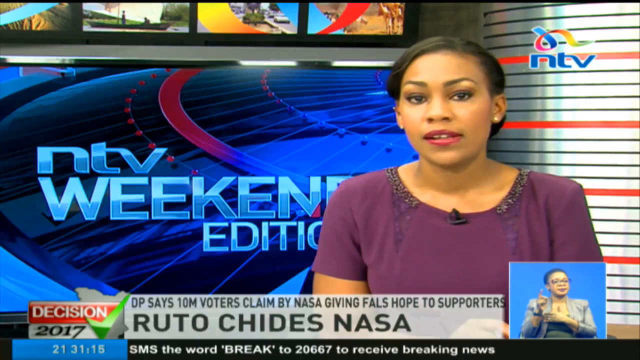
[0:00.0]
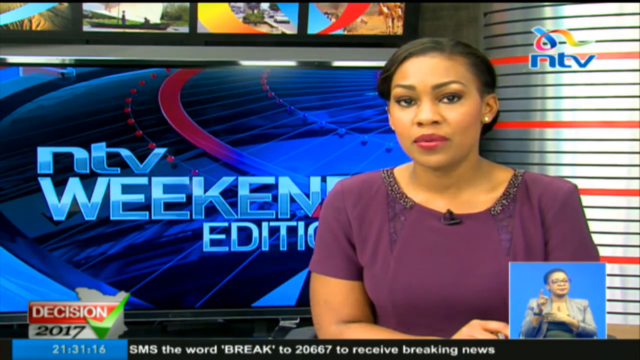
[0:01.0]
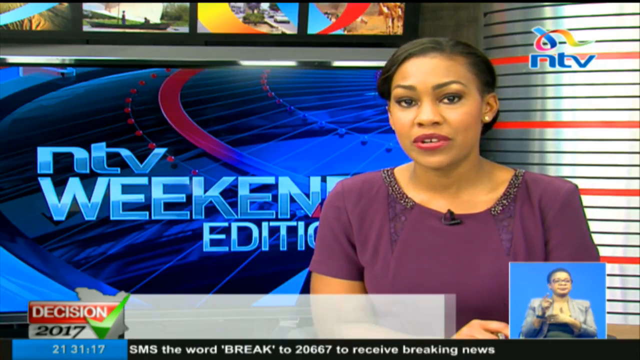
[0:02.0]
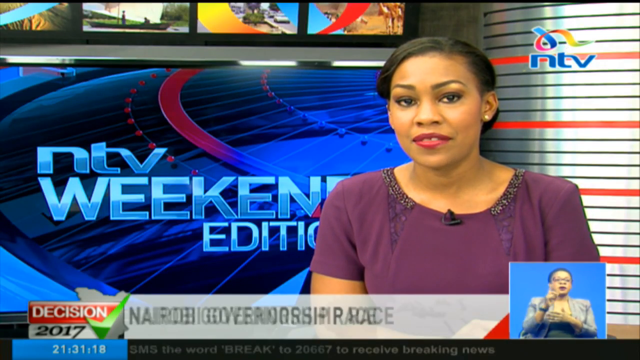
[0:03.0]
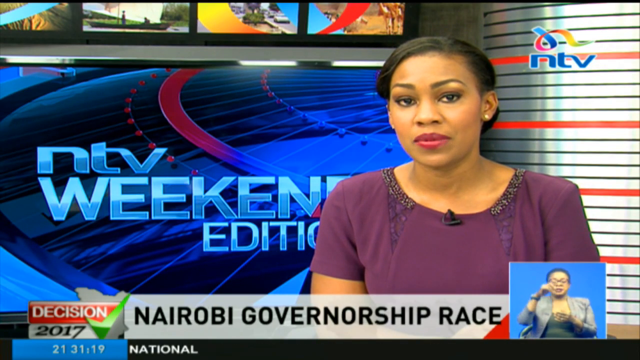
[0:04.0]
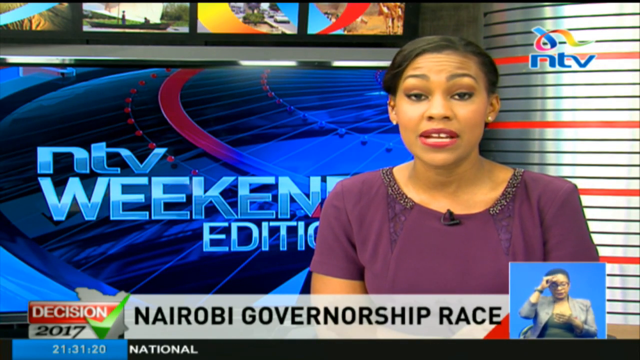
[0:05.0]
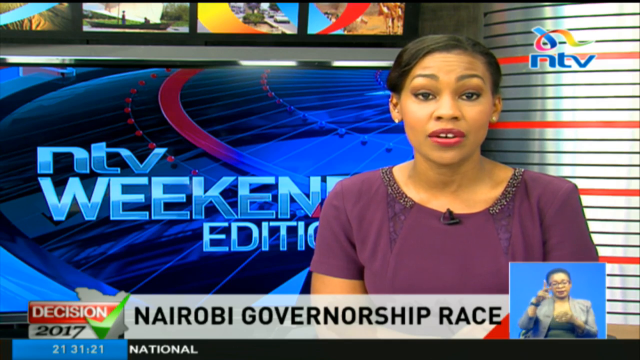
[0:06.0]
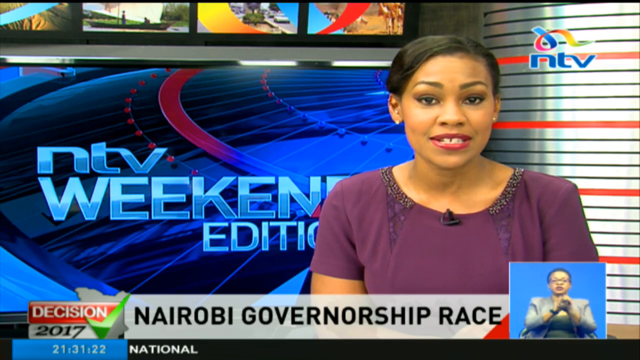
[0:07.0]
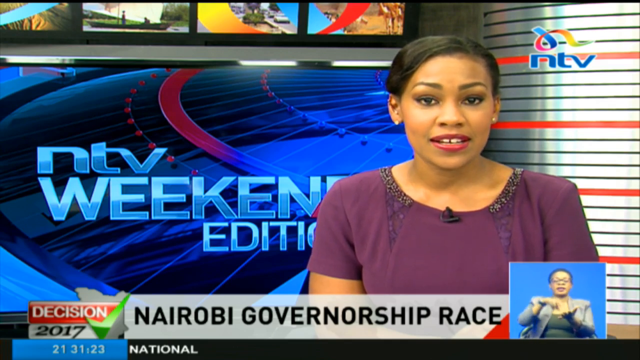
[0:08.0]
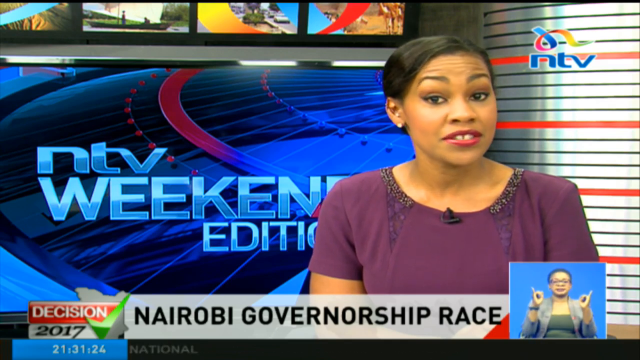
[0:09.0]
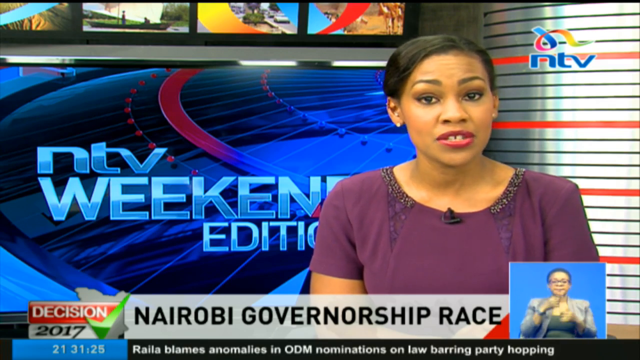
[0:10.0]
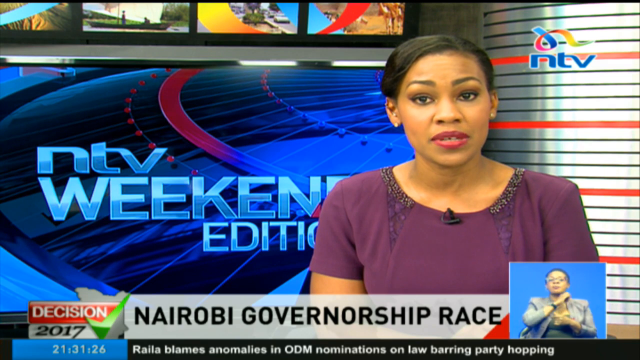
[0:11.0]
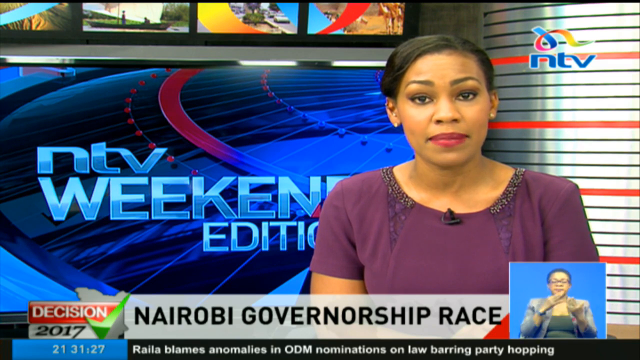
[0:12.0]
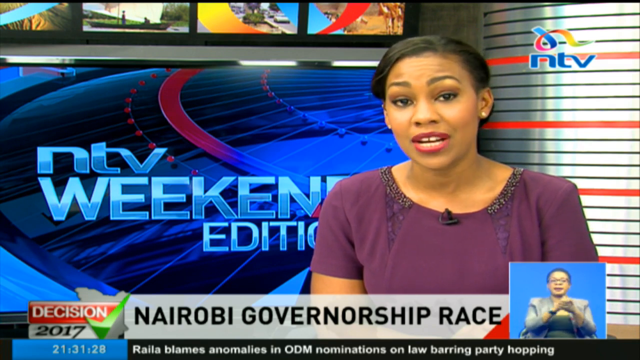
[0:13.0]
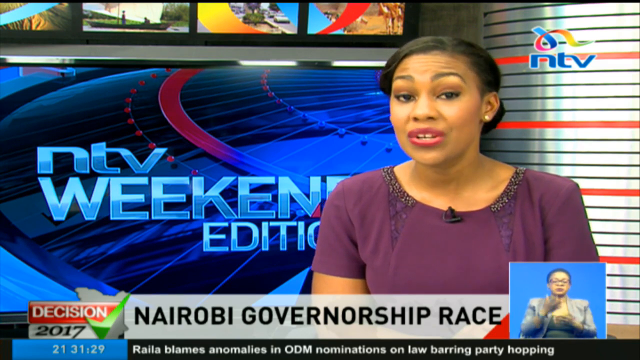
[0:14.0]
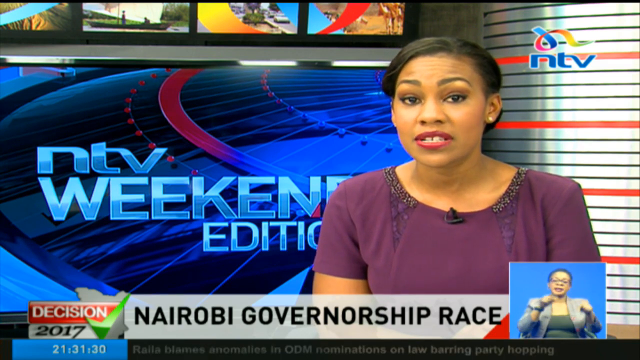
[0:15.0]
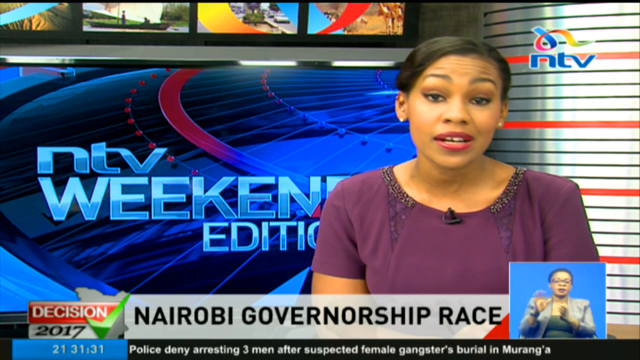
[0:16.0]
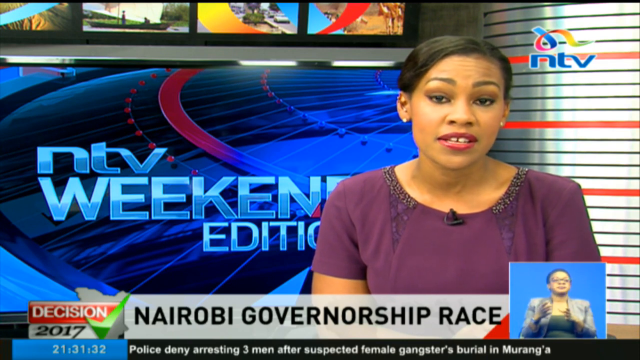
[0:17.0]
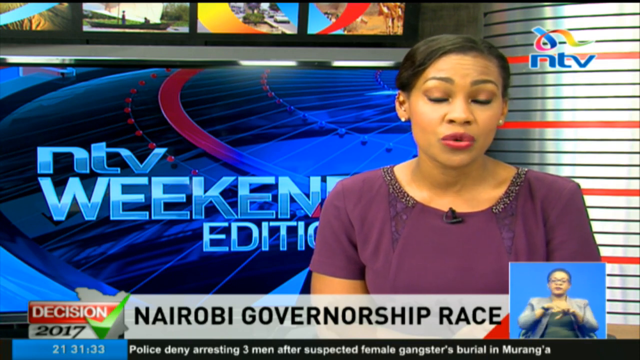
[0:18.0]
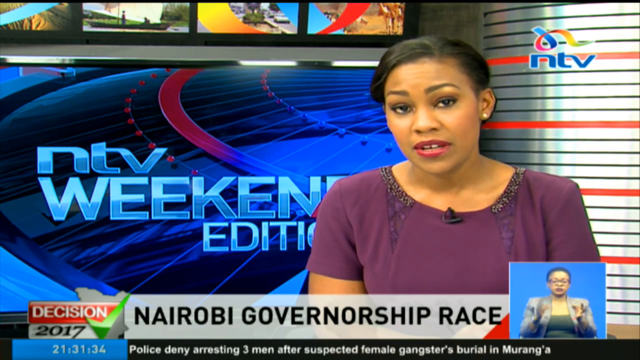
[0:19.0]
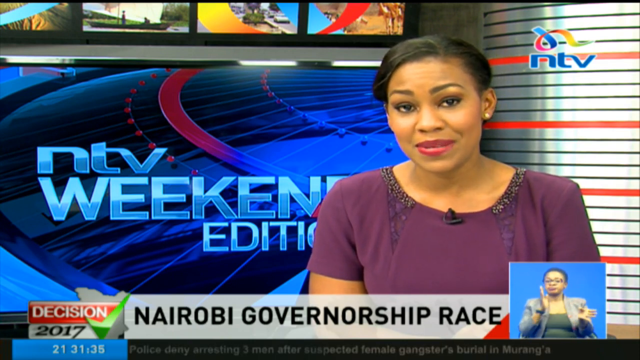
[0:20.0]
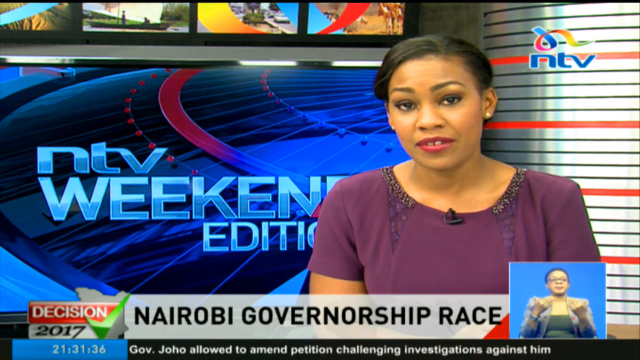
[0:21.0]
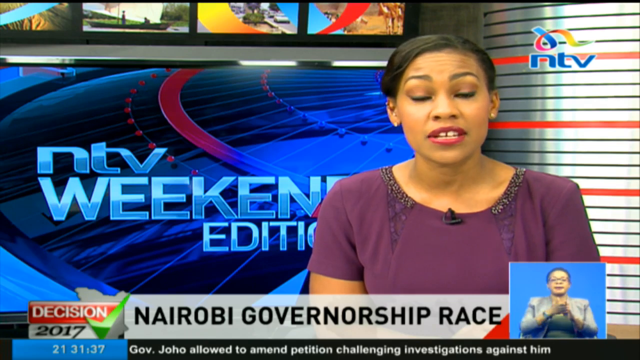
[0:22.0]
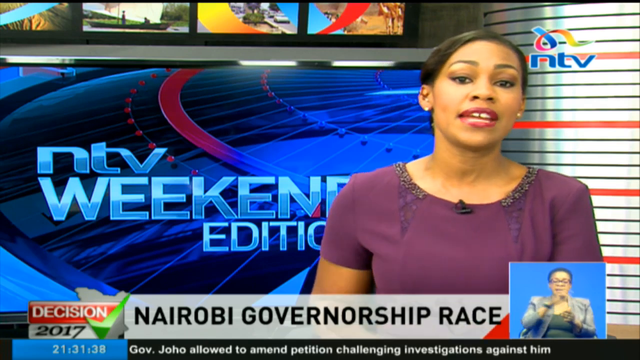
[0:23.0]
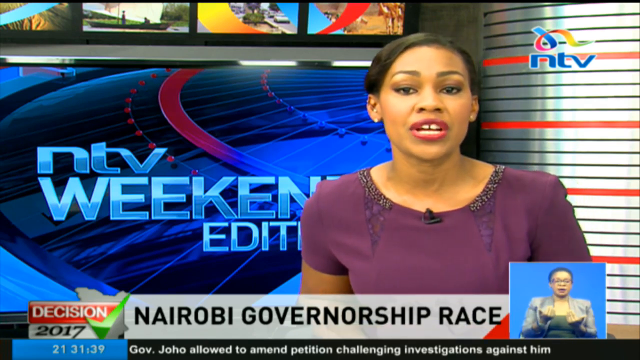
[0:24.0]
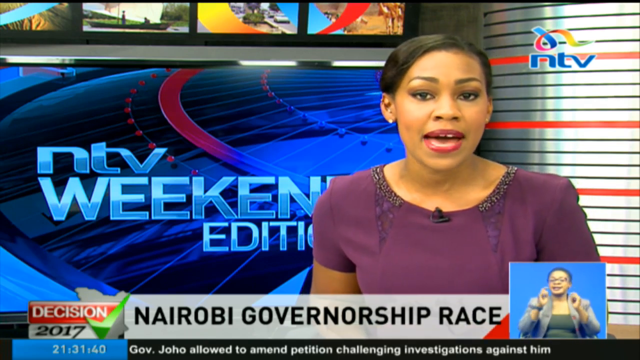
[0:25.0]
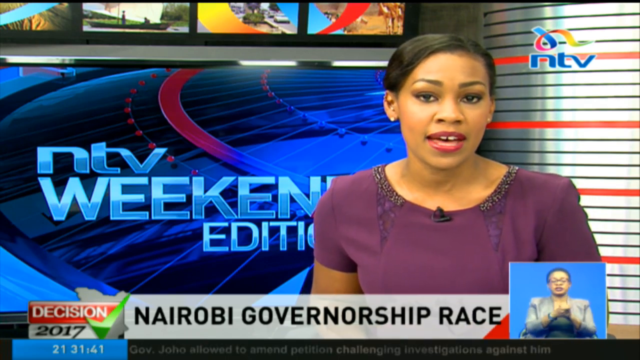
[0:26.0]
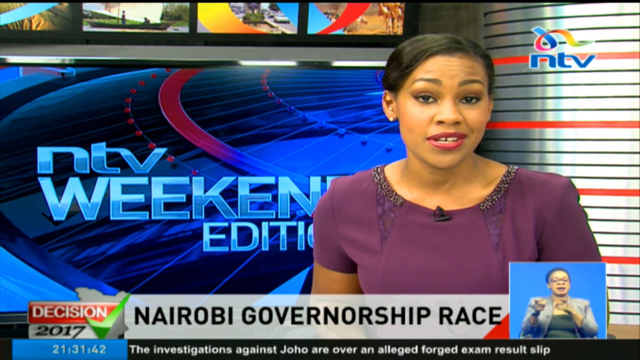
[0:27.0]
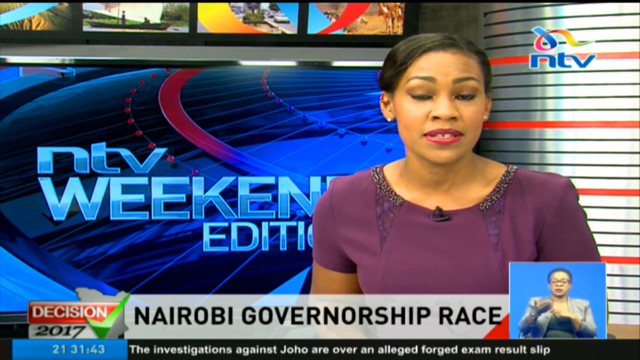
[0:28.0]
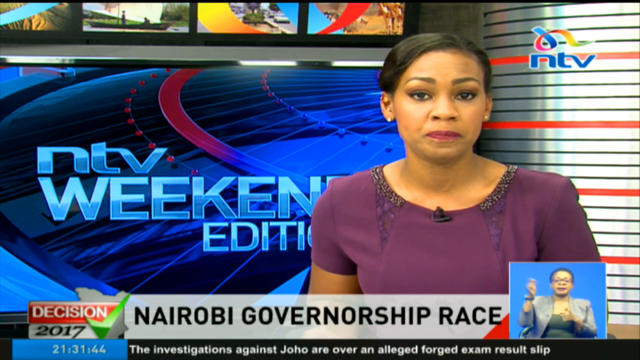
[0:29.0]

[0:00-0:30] A female news reporter is on the right side of the screen, facing the camera. At the bottom left of the screen is the text "Decision 2017," and to the right of that it says "DP says 10M voters claimed by NASA giving false hope to supporters." Below that it reads "Ruto chides NASA." In the bottom right of the screen, a woman is doing sign language translation. The background says "MTV weekend edition." The reporter talks, her right elbow resting on something, possibly a desk. The words at the bottom of the screen change to "NAIROBI governorship race," with NAIROBI in black letters. The reporter continues talking while the woman at the bottom right signs, moving her hands up and down and all around. The reporter sort of leans back and then leans forward again as she keeps talking; she has a gap between her two front teeth. The video then switches to a man standing in front of a podium, talking, with a crowd of people behind him.